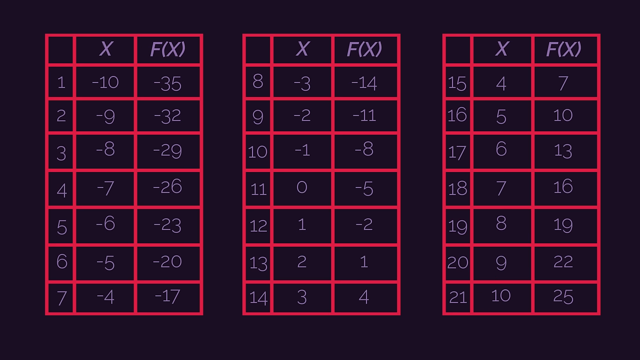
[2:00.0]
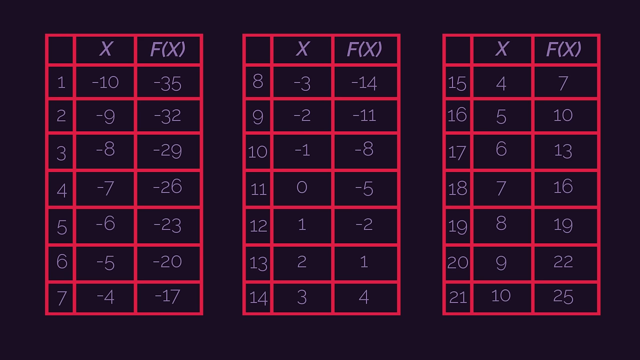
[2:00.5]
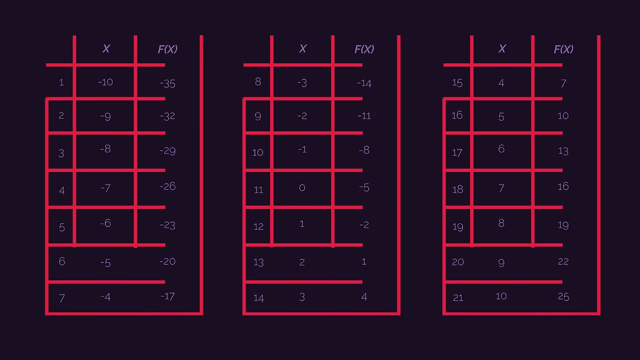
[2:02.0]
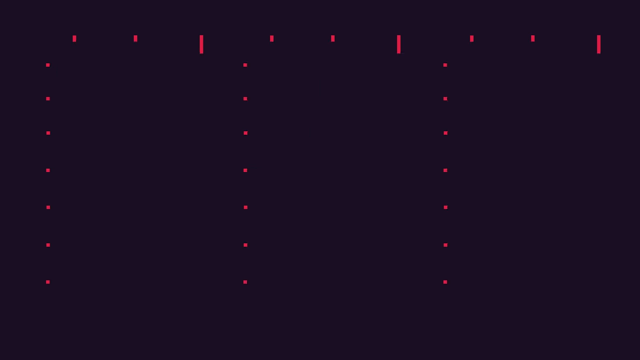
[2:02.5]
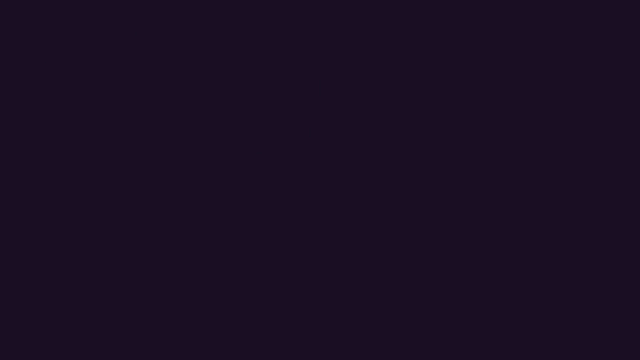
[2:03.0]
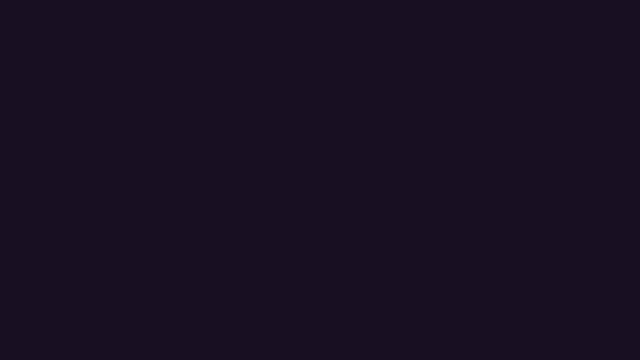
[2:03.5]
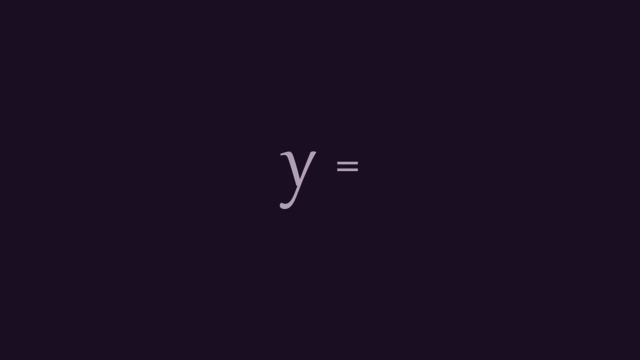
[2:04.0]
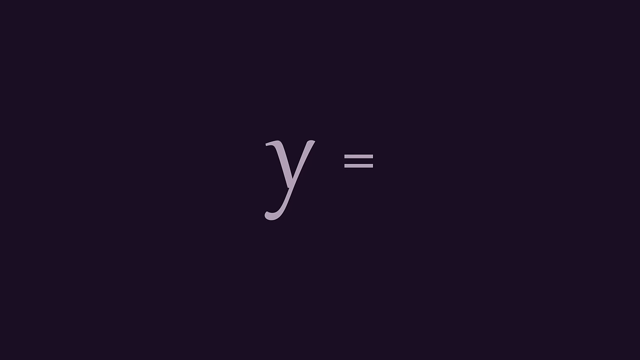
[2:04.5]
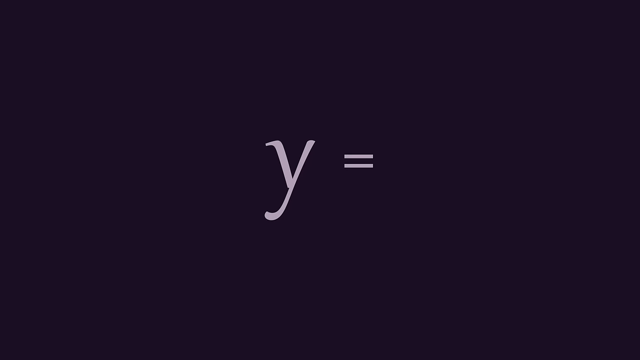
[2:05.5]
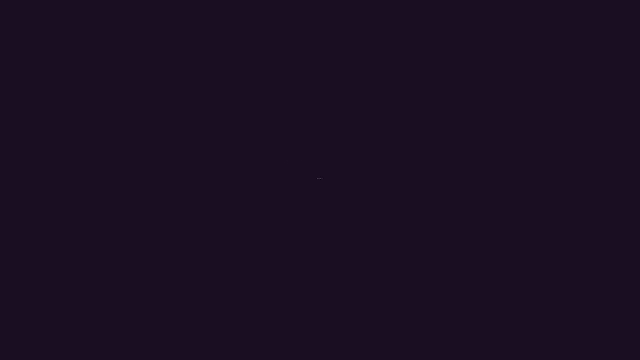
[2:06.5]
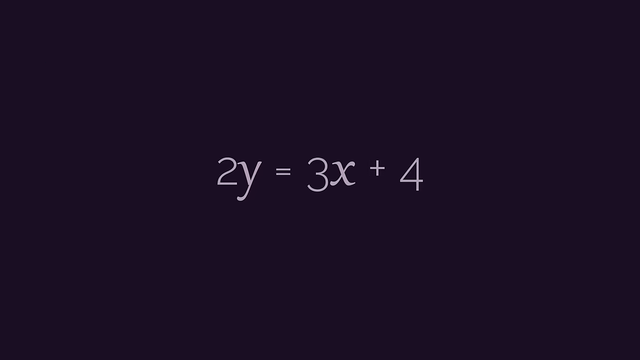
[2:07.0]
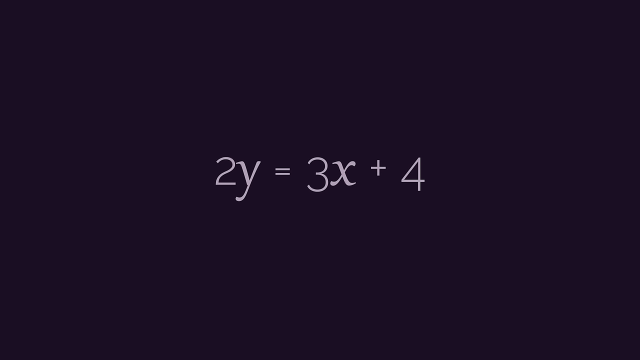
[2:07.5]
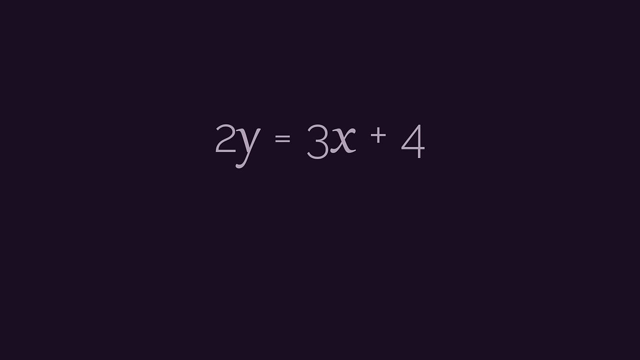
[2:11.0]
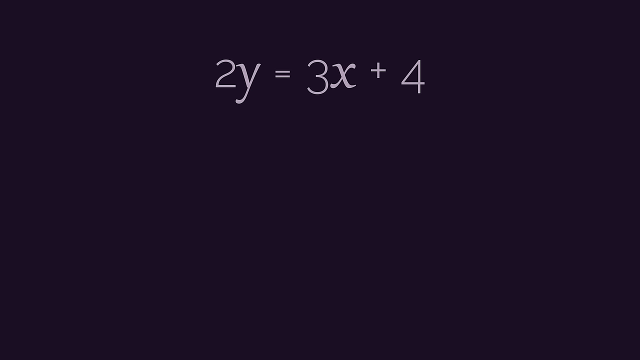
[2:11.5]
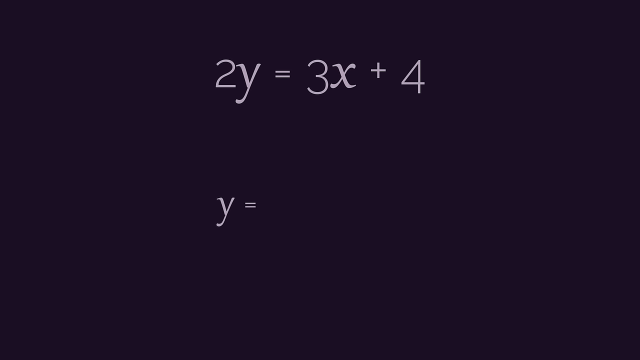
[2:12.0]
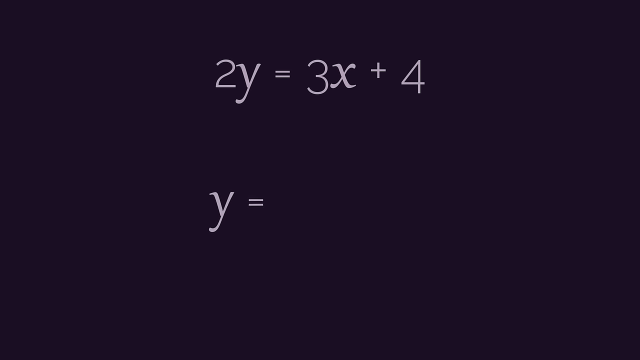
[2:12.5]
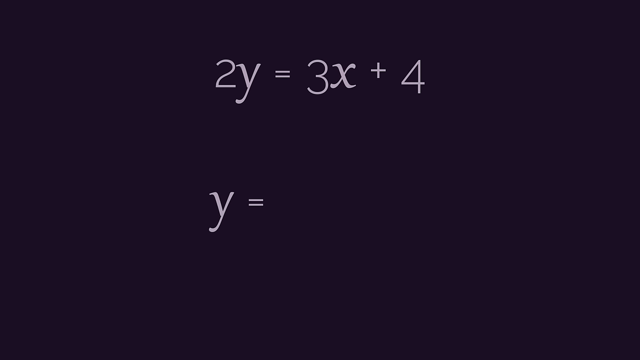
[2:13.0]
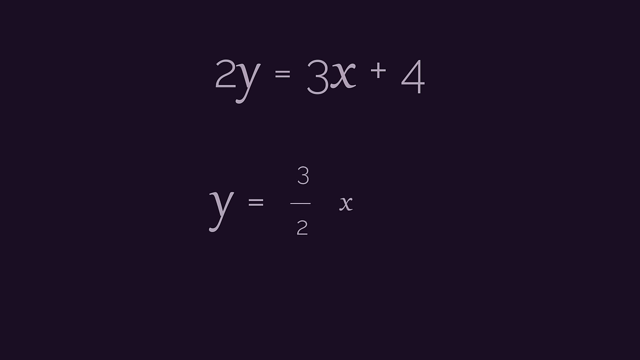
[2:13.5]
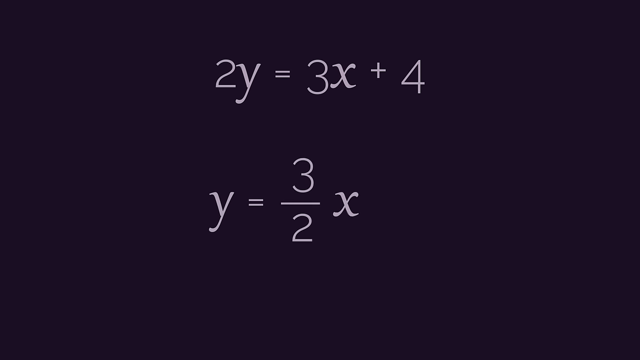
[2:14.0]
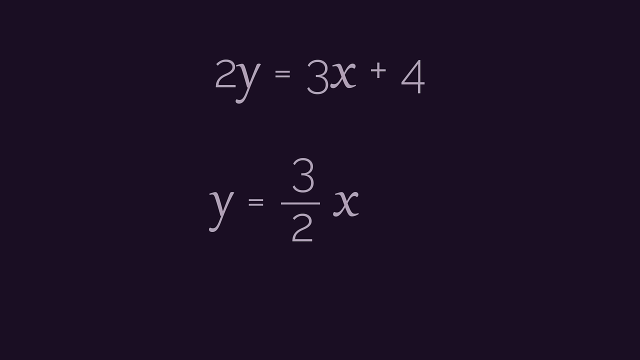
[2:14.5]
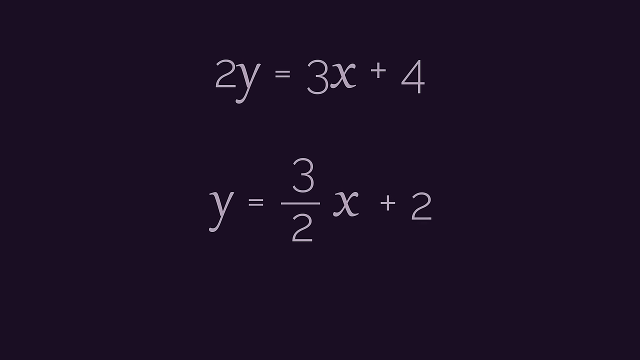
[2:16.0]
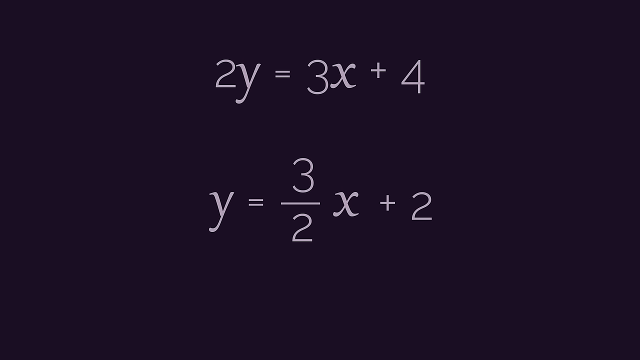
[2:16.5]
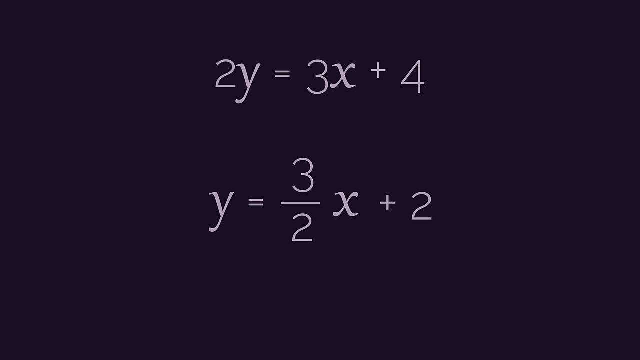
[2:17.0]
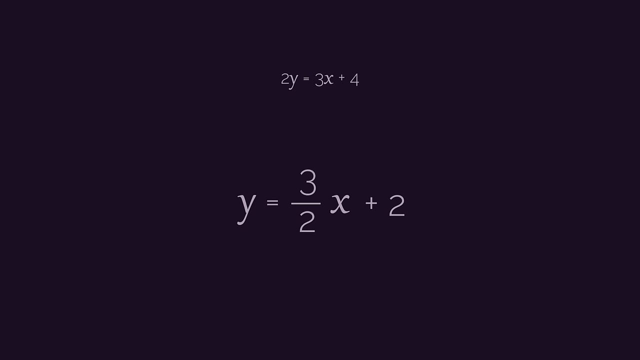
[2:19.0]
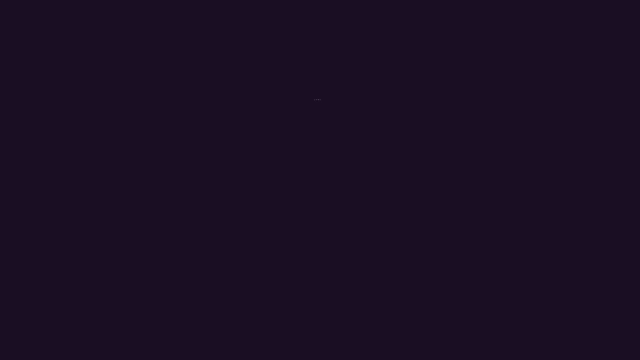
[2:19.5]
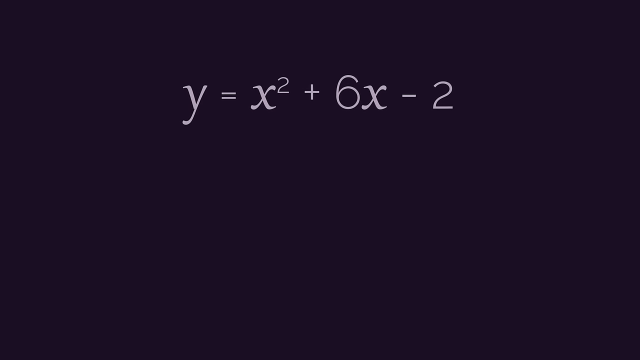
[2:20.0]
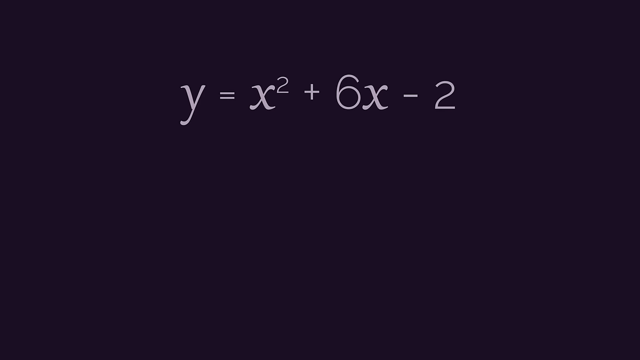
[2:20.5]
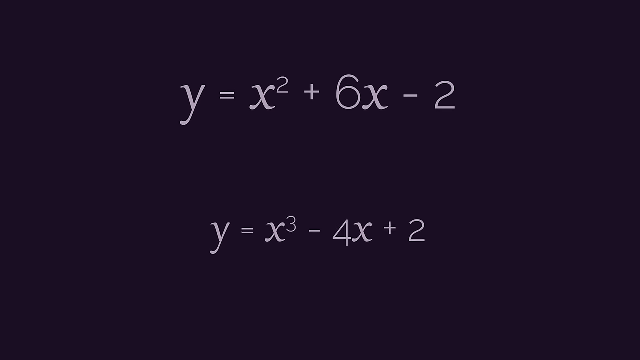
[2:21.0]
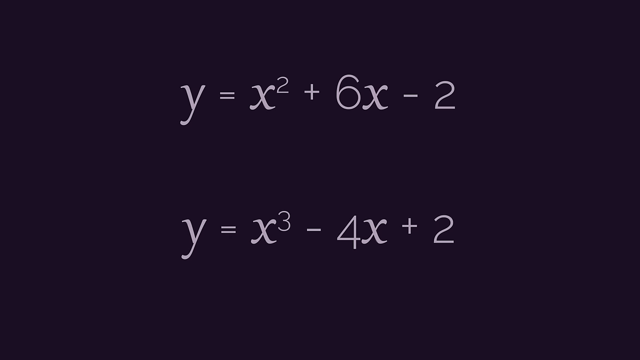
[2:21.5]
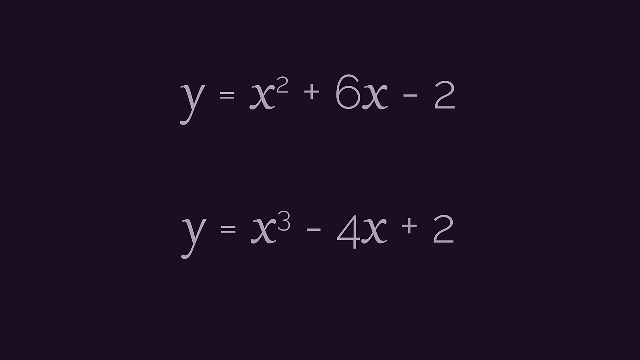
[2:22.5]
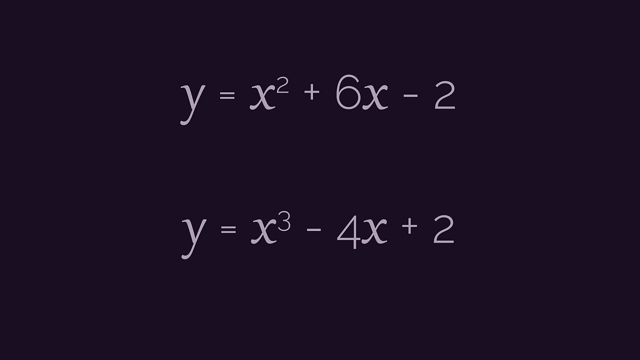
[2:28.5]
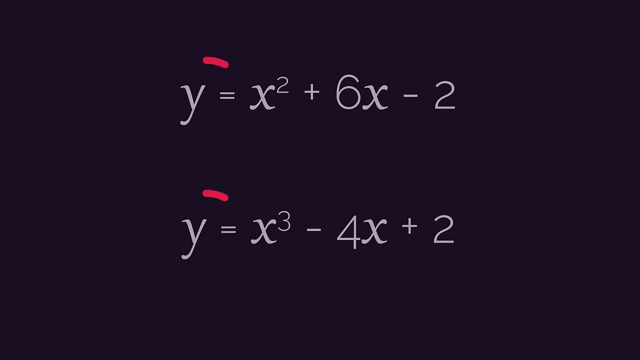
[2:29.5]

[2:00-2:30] Three function tables show values for x and values for f of x, 21 functions in all, with each x value giving a different f of x value. In function number 1, x is negative 10 and f of x is negative 35; in function number 2, x is negative 9 and f of x is negative 32; this continues all the way to function number 21, where x equals 10 and f of x equals 25. The tables disappear and are replaced by a caption that says "y equals." This disappears too and is replaced by the equation 2y equals 3x plus 4. Another equation appears below that reads y equals 3 divided by 2 x plus 2. These equations disappear and are replaced by two more: y equals x squared plus 6x minus 2, and y equals x cubed minus 4x plus 2.